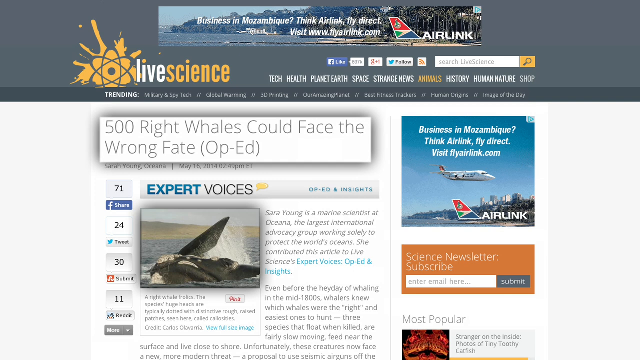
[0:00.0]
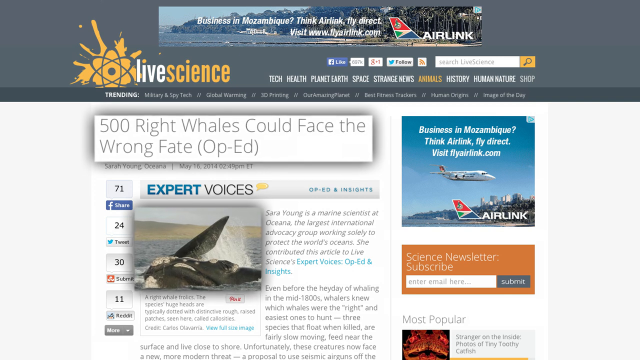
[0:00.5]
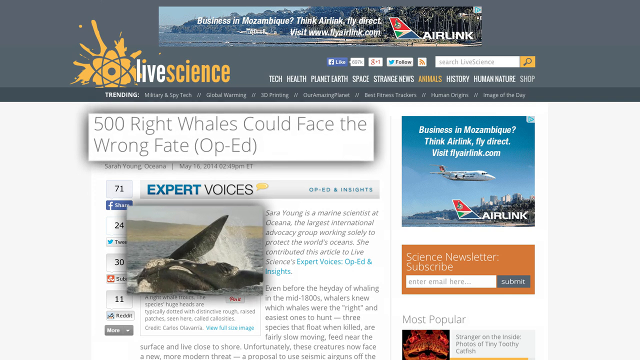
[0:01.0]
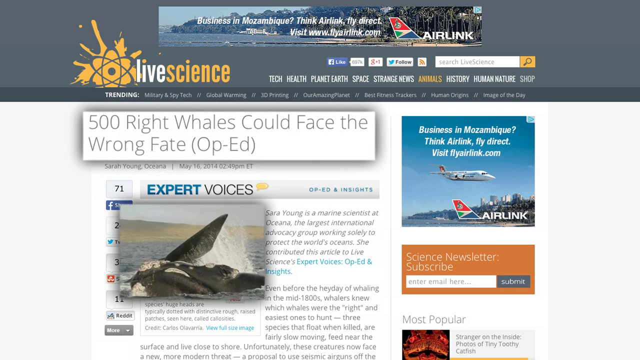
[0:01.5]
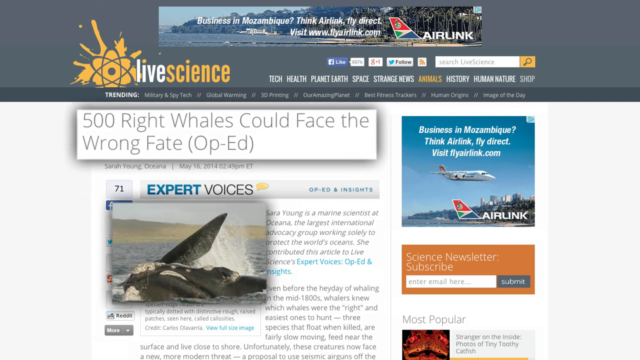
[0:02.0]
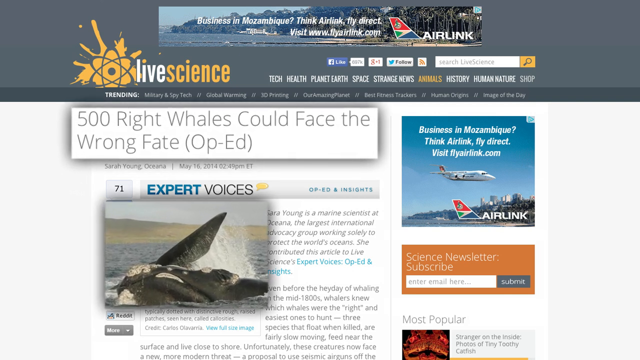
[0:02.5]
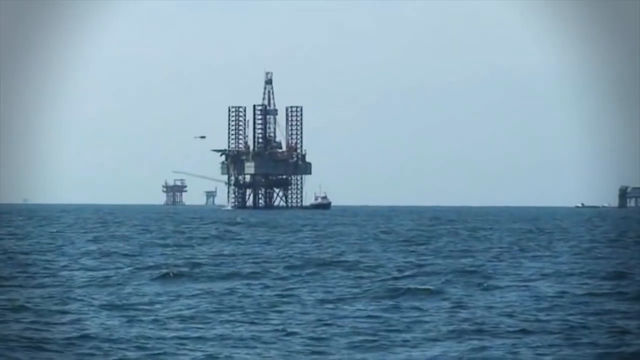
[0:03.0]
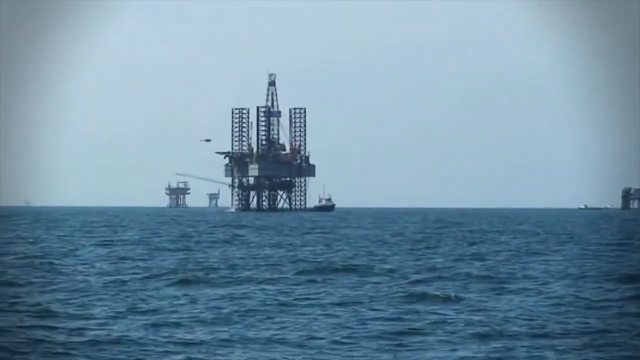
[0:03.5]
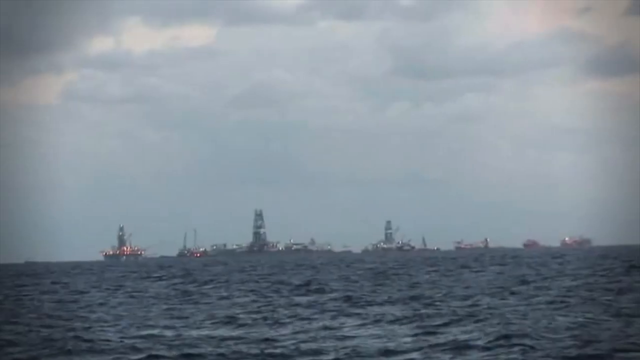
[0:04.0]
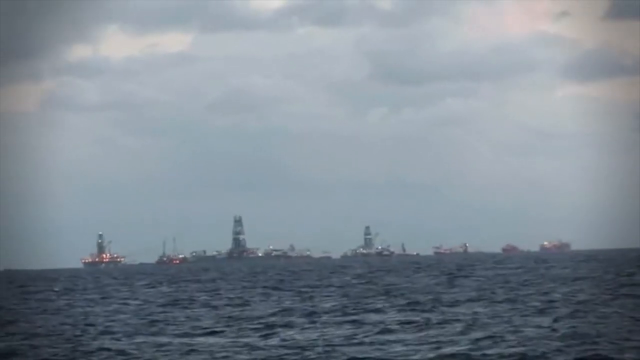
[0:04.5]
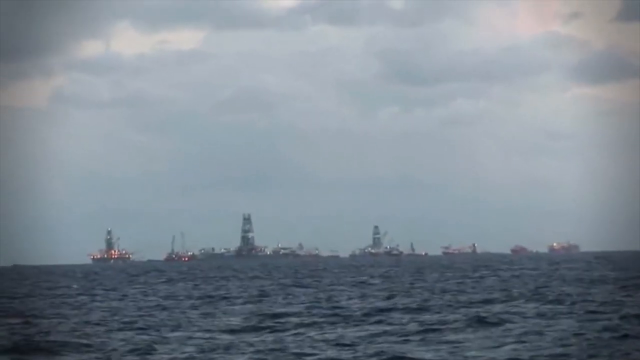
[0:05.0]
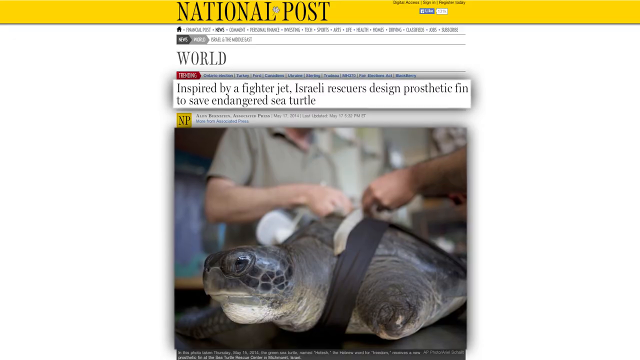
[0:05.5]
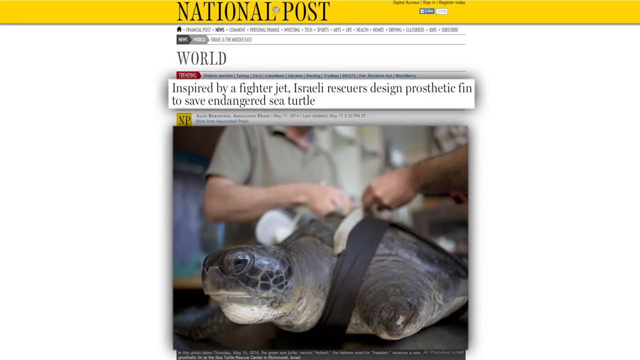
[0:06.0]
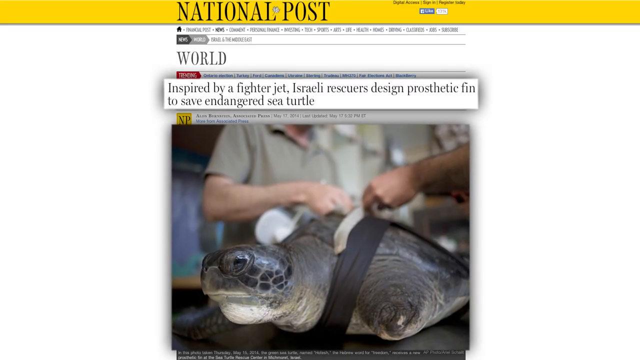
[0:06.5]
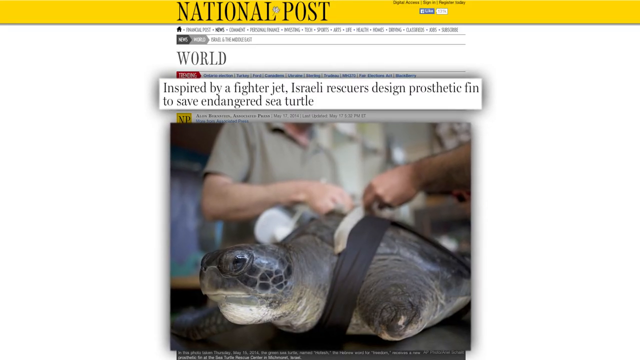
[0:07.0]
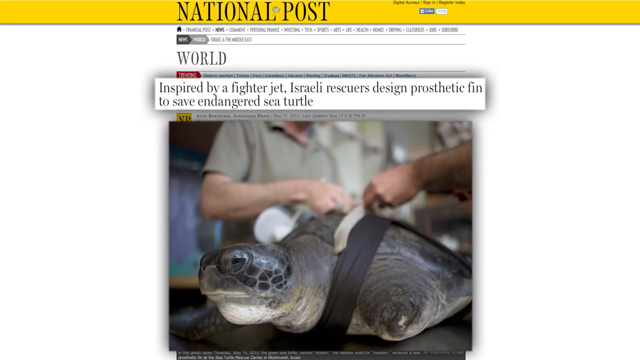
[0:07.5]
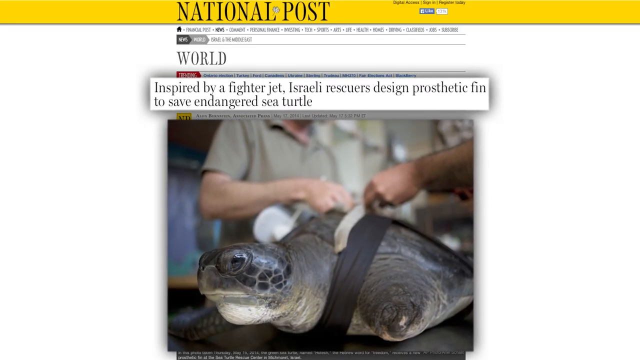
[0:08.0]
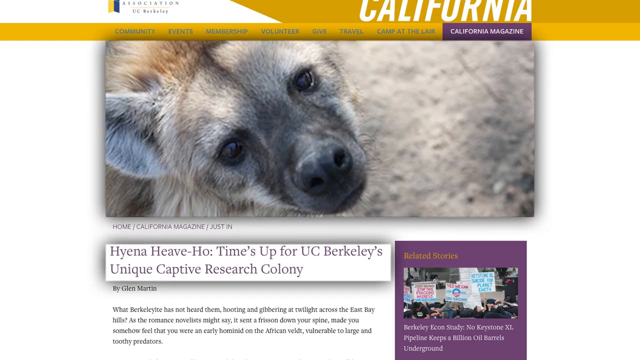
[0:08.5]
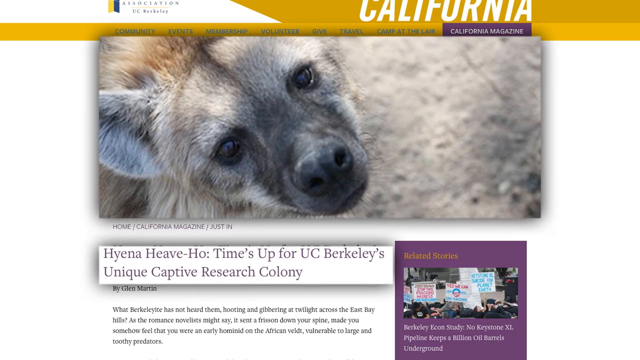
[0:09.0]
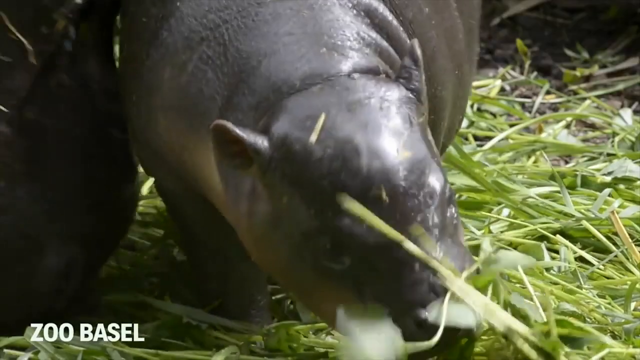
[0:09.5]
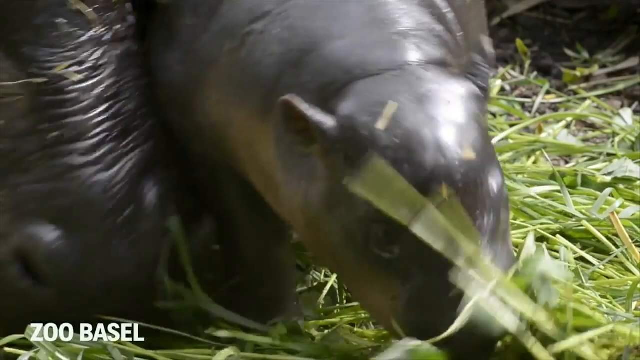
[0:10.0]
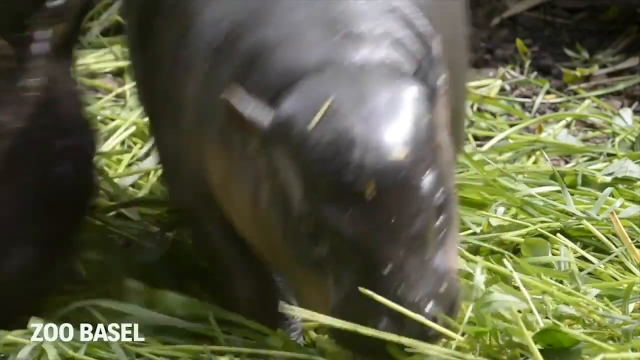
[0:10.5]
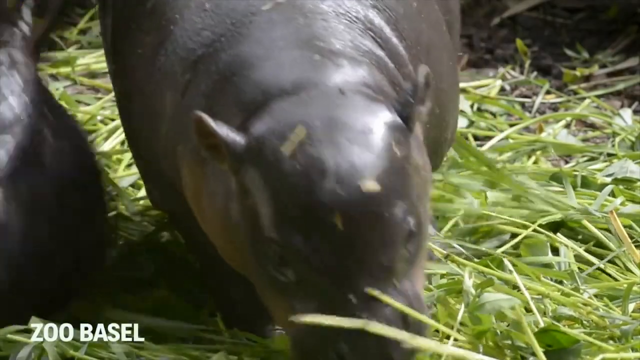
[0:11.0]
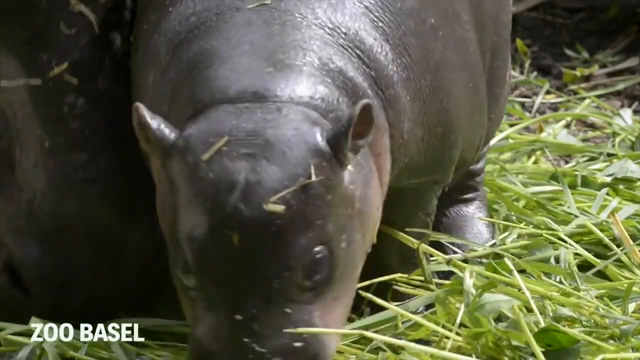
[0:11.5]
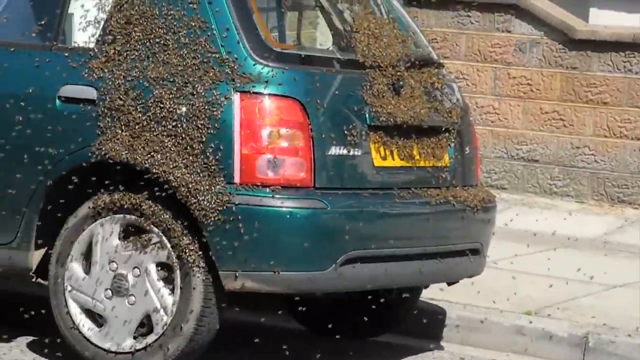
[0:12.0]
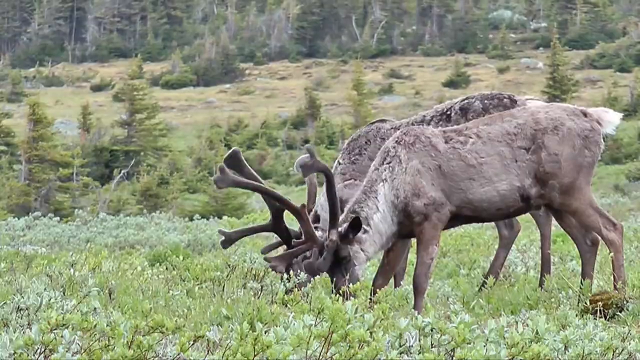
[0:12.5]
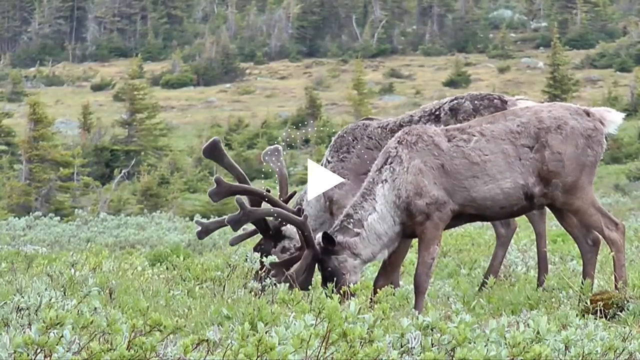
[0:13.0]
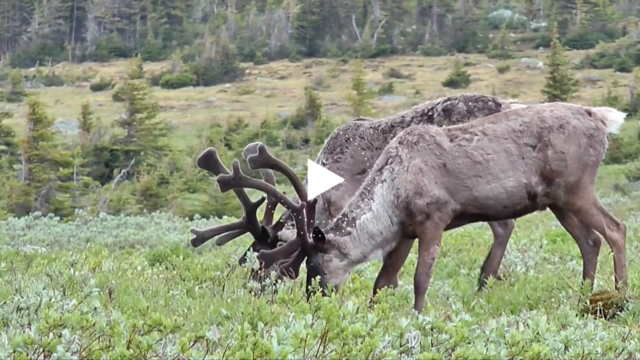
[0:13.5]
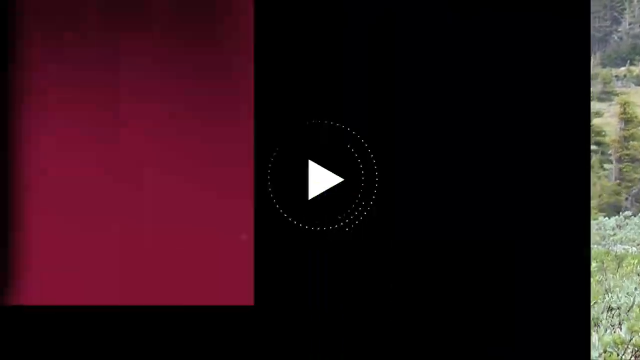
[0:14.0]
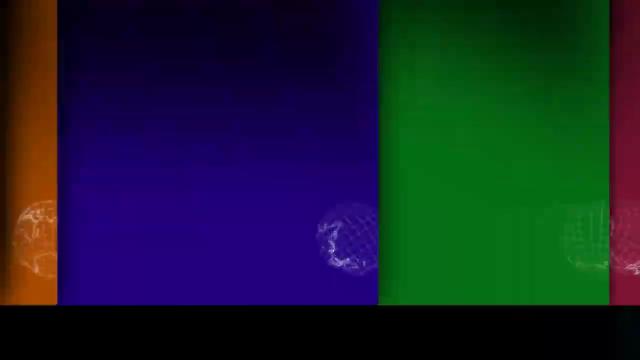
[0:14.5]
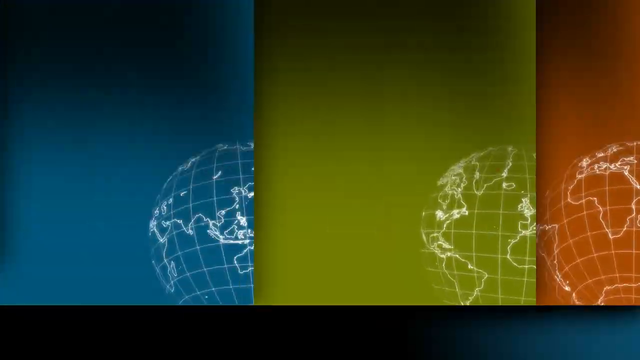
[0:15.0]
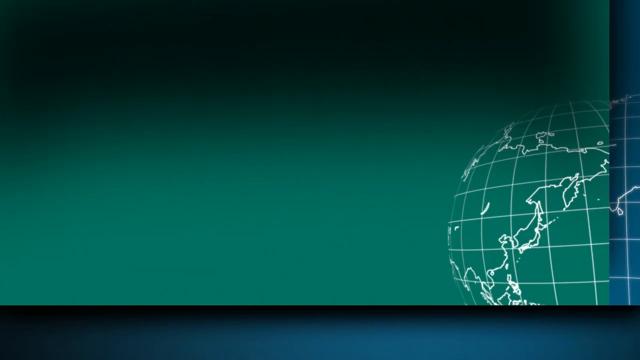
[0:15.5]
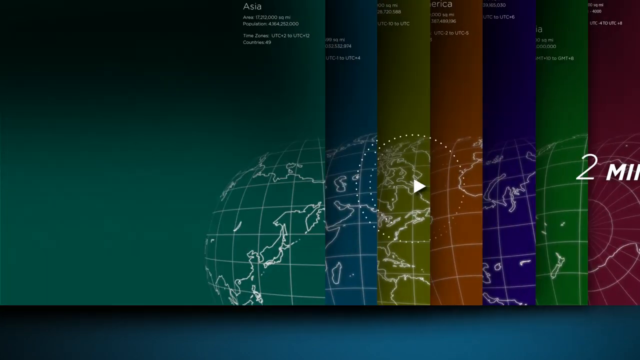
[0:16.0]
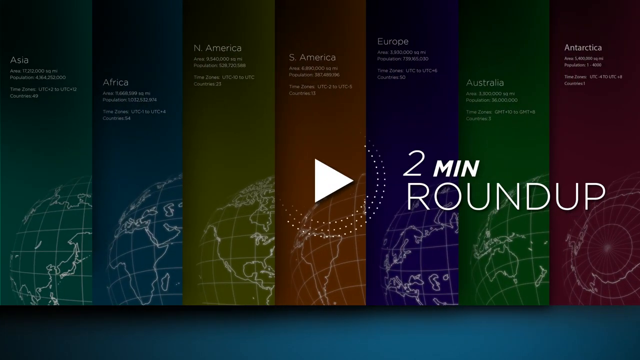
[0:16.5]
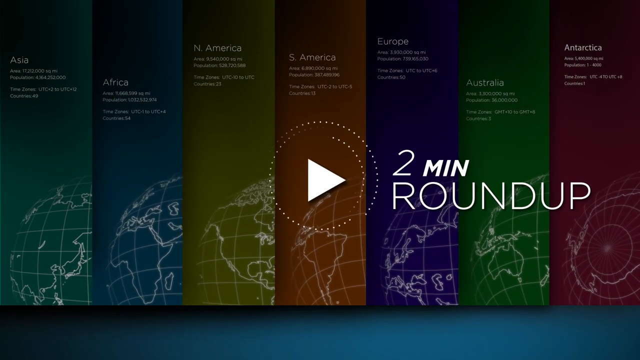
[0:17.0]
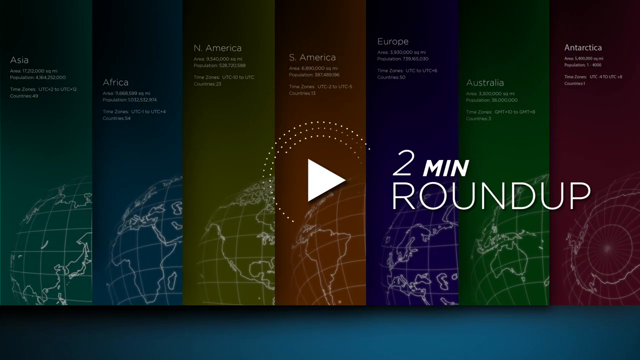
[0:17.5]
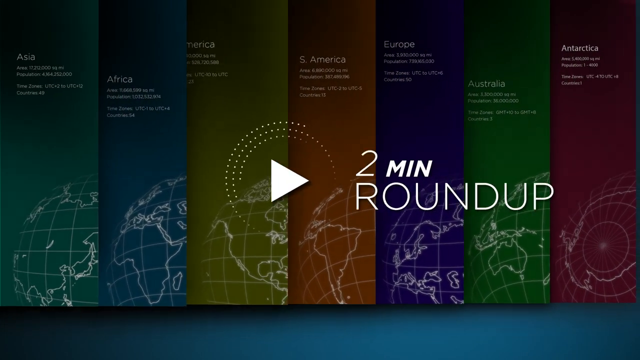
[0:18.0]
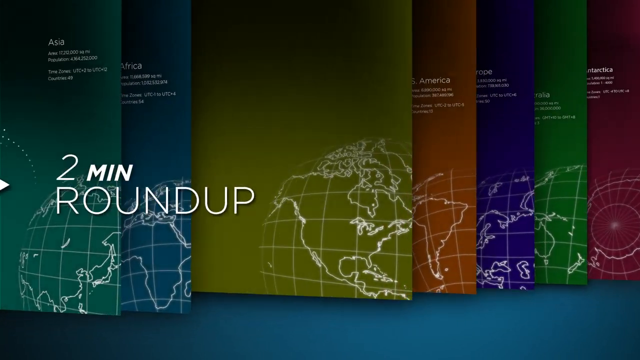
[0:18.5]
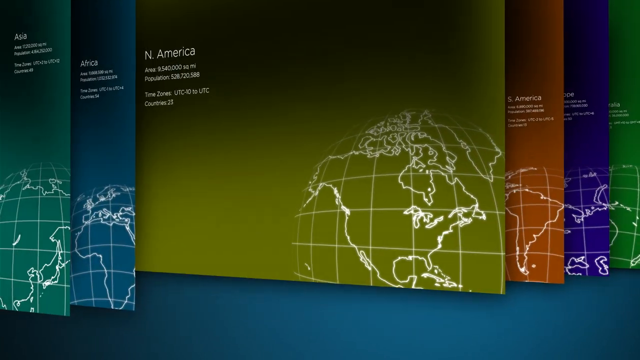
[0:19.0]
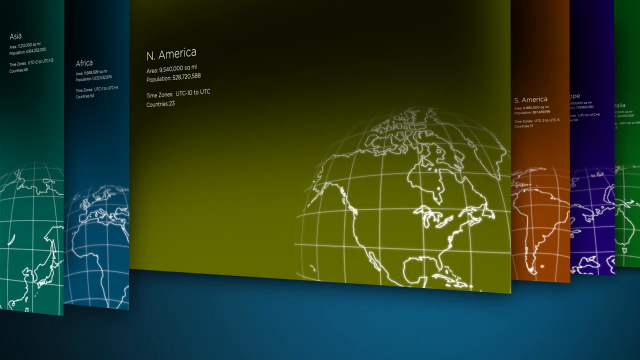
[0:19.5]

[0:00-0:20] A news article from Live Science appears first, with a highlighted headline reading "500 Right Whales Could Face the Wrong Fate, op-ed." The view zooms in on a picture of a whale, then cuts to the ocean, where different boats, or factory-looking boats, are in the water. Next comes another news article, this one from the National Post, with the headline "Inspired by a firefighter jet, Israeli rescuers design prosthetic fin to help endangered sea turtle." A sea turtle is shown being helped by a group of people, or being lifted up with a strap. Another article follows with what appears to be a hyena and the headline "hyena heave ho, times up for the UC Berkeley's unique captive rescue colony." A series of different animals follows: a group of hippos, bees on a car, and what appears to be elk. The video then cuts to a screen showing the seven continents, with the text "two minute roundup."